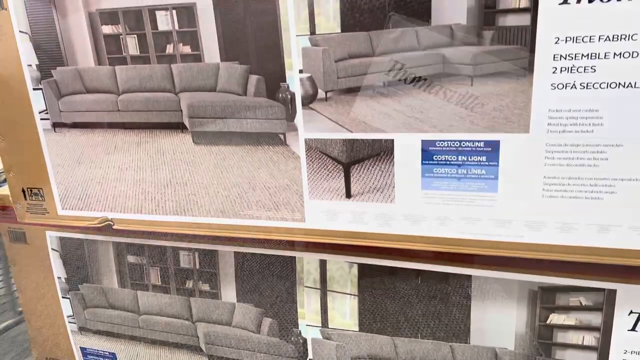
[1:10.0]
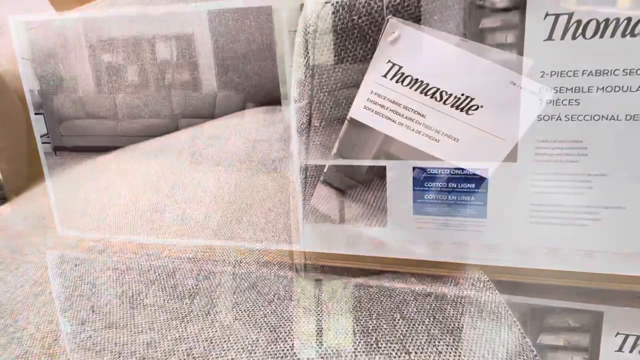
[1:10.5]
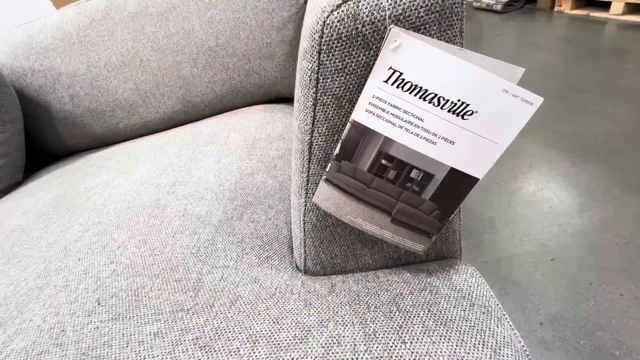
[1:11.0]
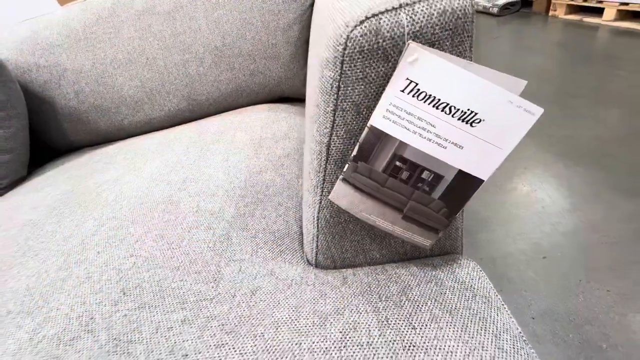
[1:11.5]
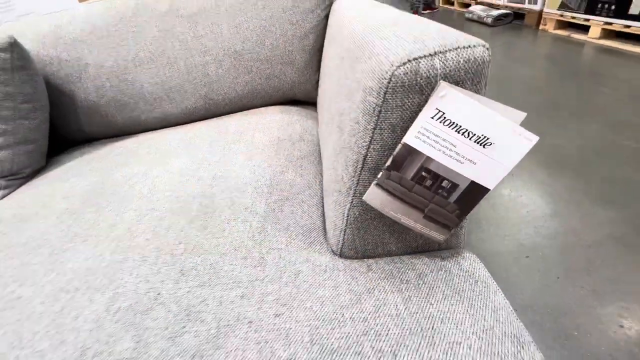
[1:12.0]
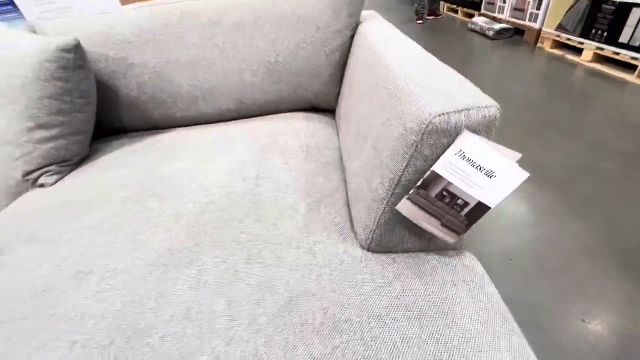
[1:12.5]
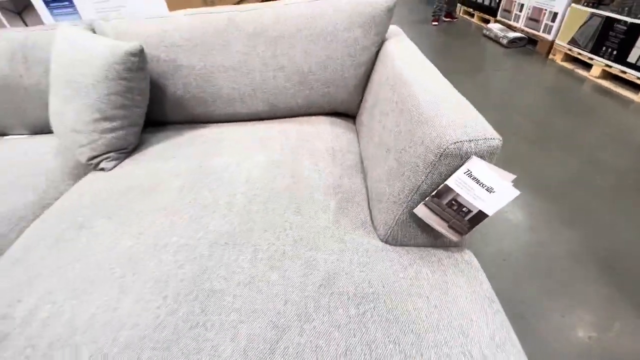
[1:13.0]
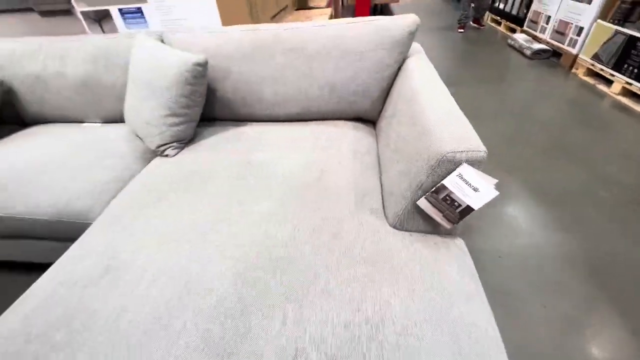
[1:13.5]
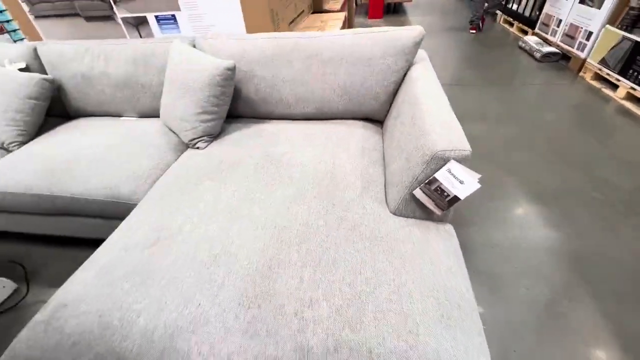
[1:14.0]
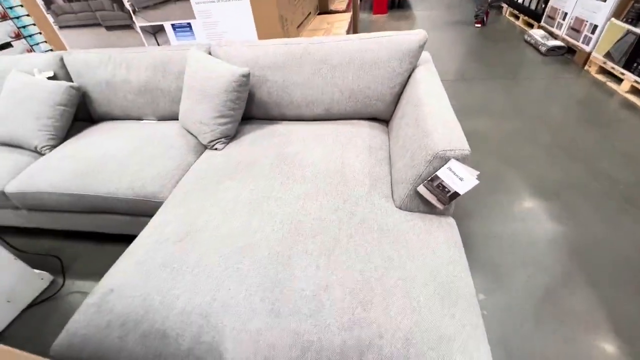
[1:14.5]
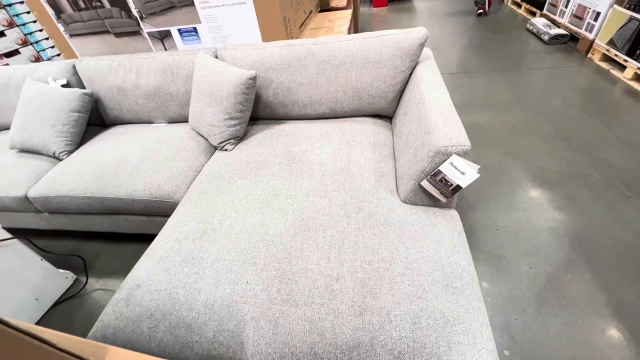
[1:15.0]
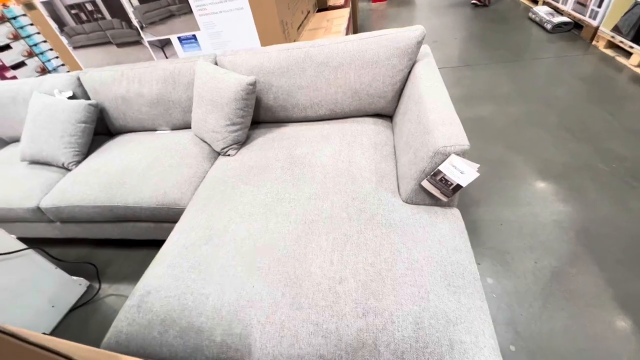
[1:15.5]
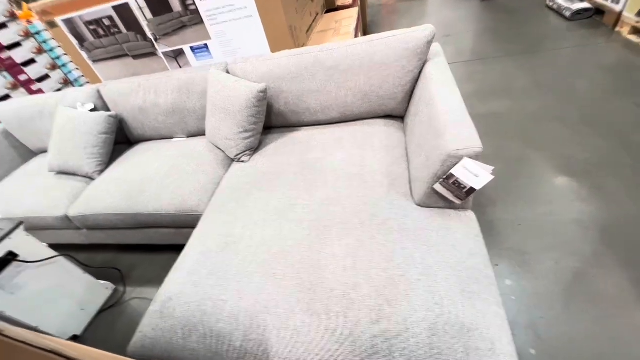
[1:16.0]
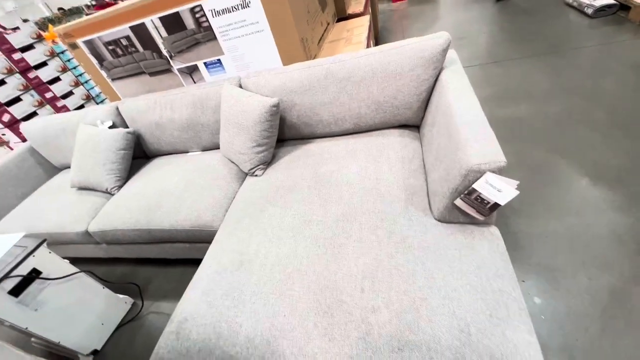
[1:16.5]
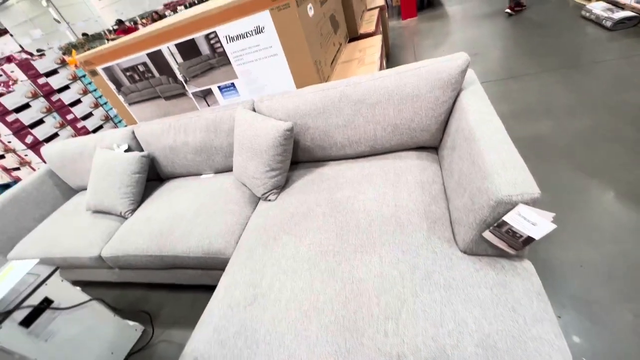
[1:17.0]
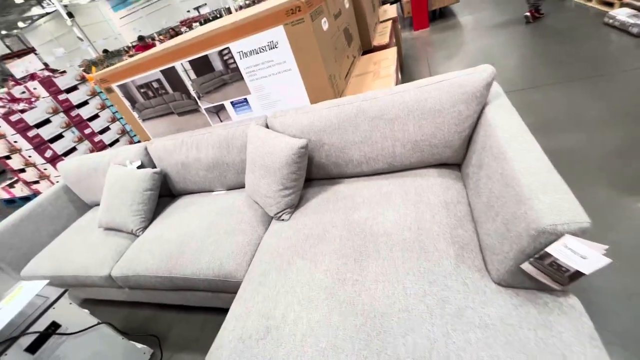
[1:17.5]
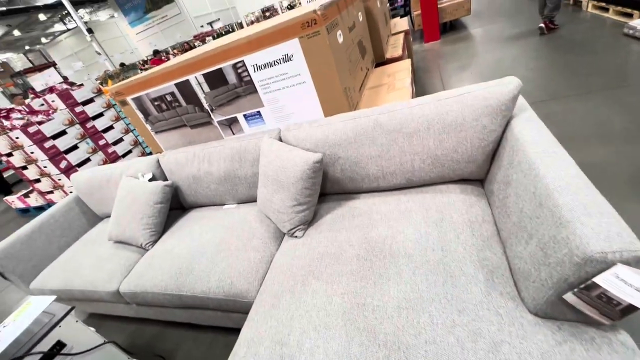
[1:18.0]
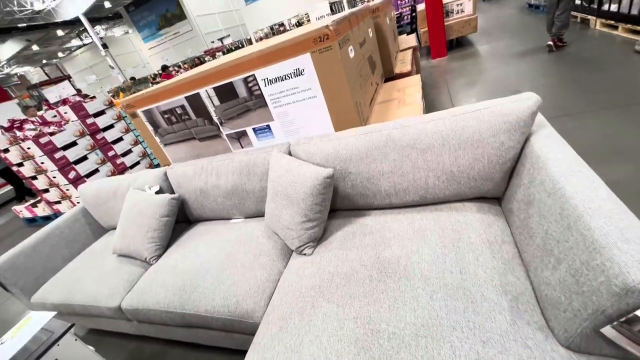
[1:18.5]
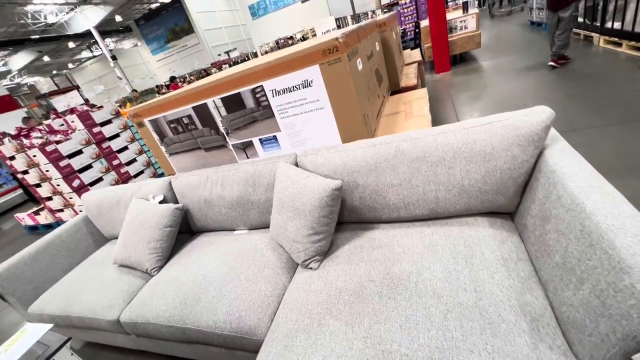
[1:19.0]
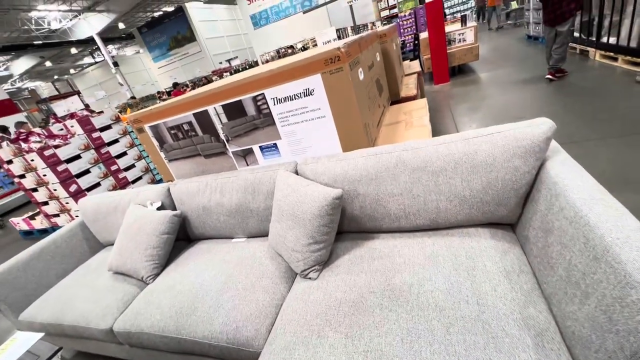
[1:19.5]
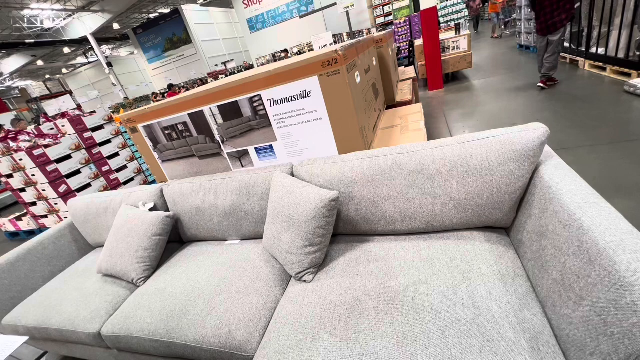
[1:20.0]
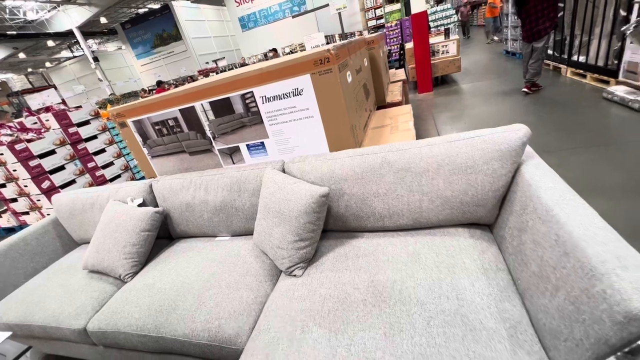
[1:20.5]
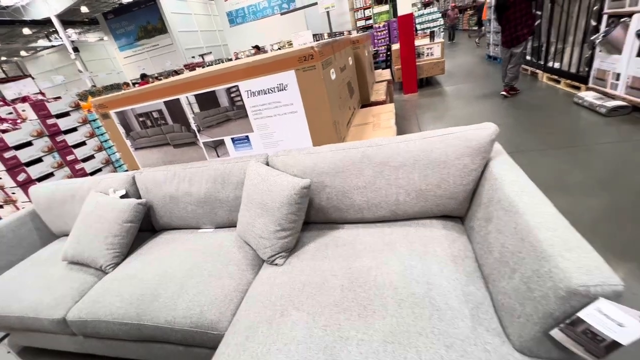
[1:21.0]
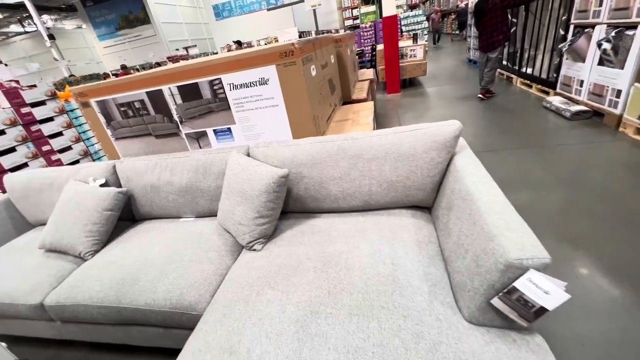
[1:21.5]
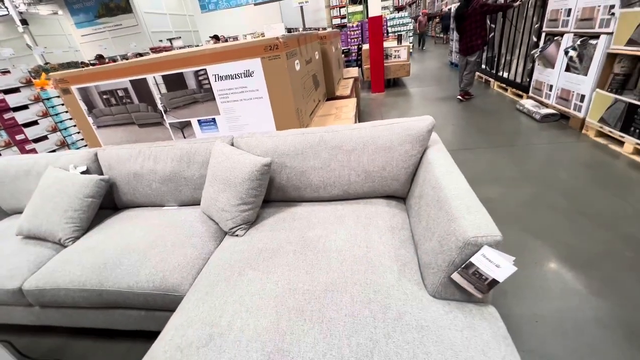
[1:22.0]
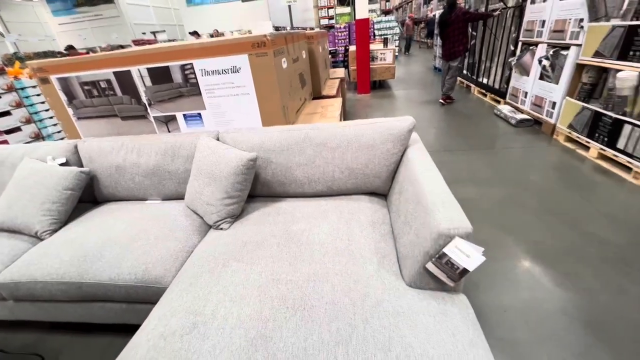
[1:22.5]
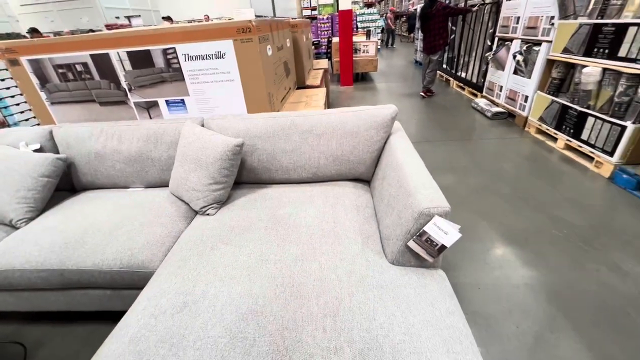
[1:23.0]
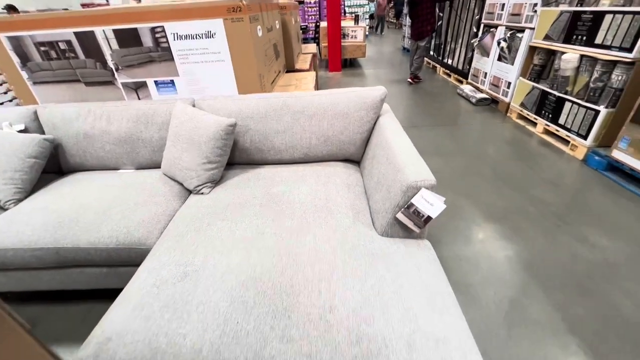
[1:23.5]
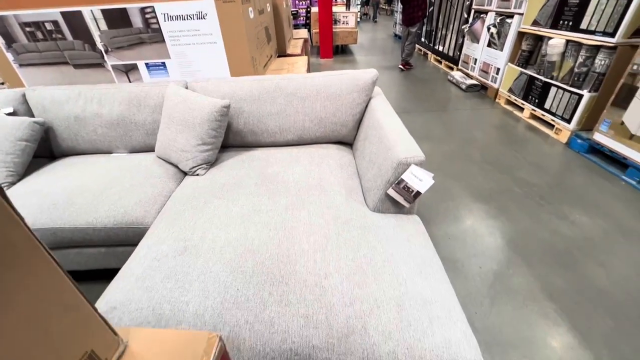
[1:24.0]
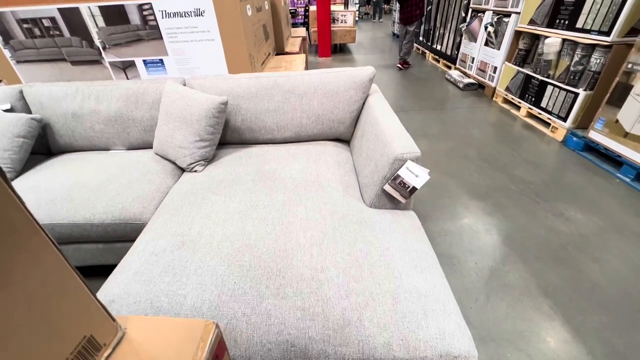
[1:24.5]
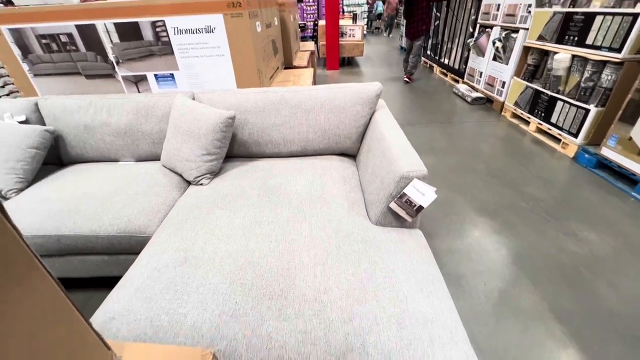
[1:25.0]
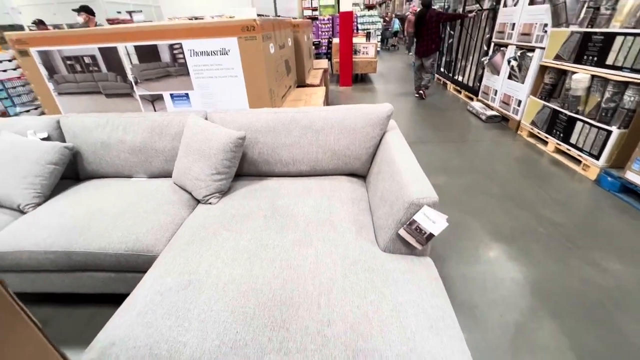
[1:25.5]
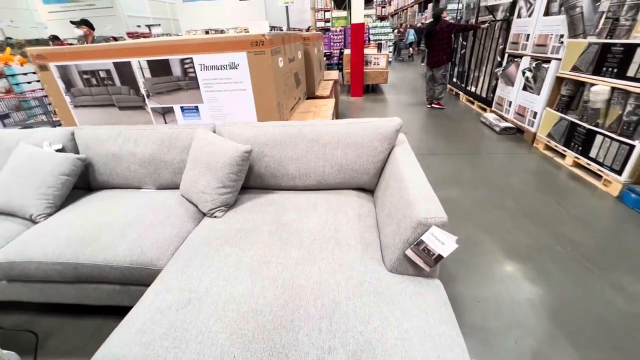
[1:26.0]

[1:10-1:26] The tag hanging off the model sofa is shown. It features the name Thomasville and a small image of the sofa that was shown on the outside of the box. The tag looks to be more of a small booklet, as it opens up and may have more information inside. Other products are on pallets behind the sofa, and different shoppers are perusing the store and picking out items. Large fluorescent lights at the top of the store reflect on the concrete floor. In the background there seem to be more furniture or home items, which a person wearing a black jacket is looking at; they look to possibly be a large set of pillows and also rugs. The couch's color looks pretty washed out under the bright lights above it.